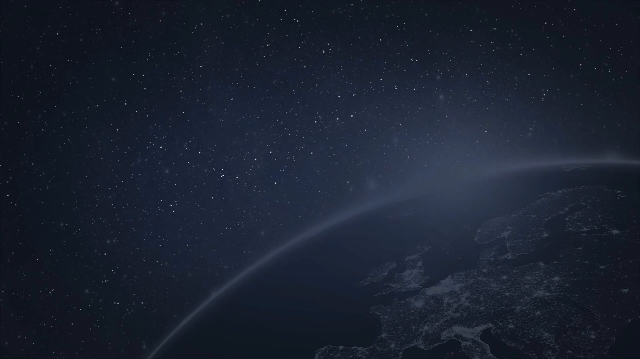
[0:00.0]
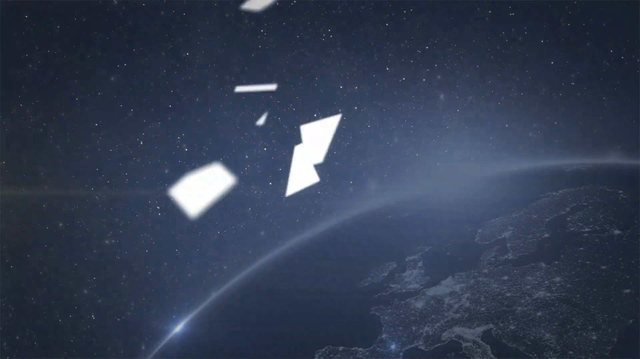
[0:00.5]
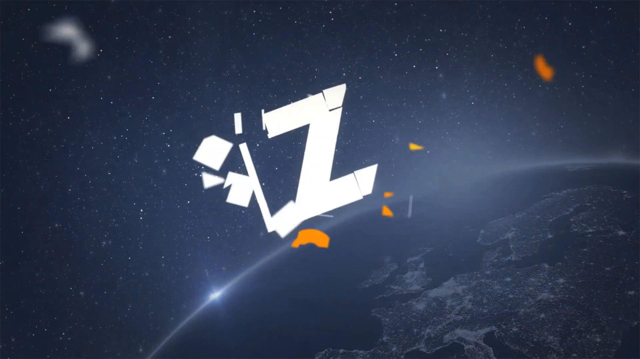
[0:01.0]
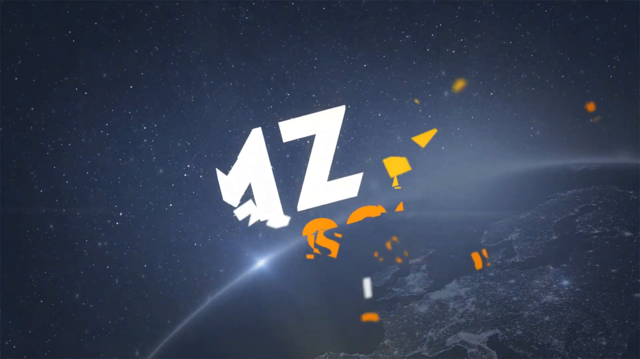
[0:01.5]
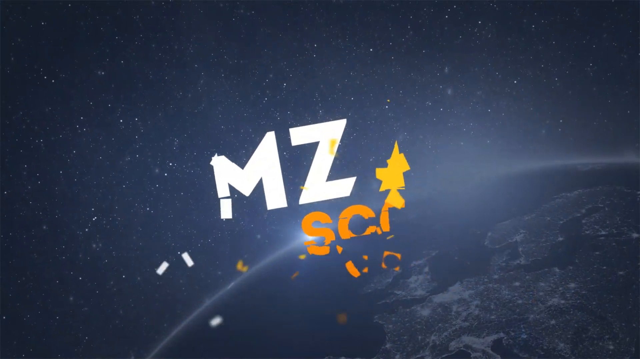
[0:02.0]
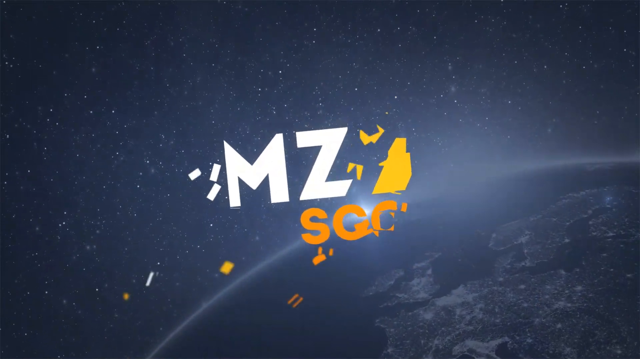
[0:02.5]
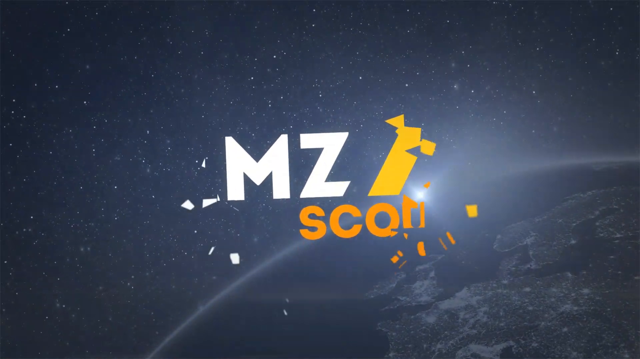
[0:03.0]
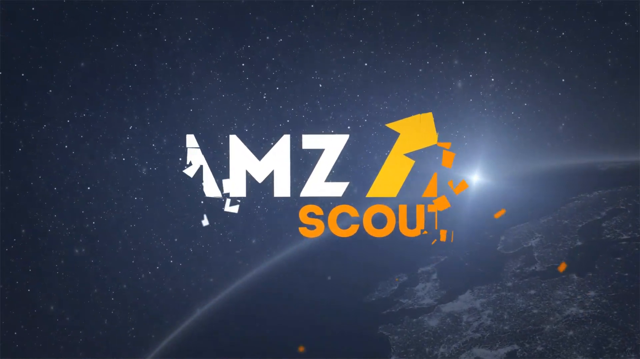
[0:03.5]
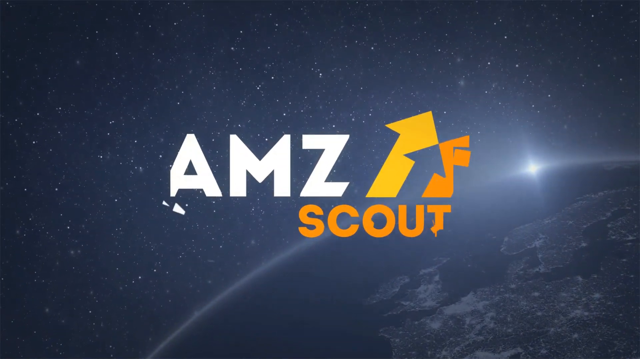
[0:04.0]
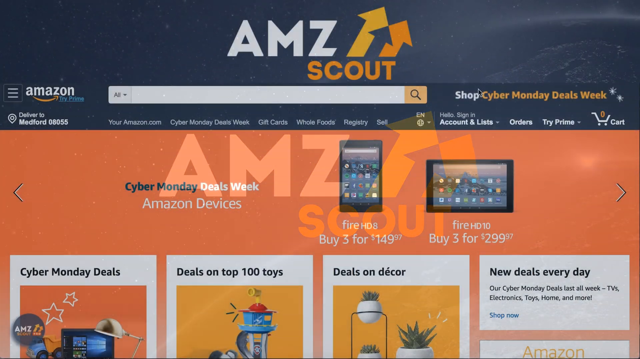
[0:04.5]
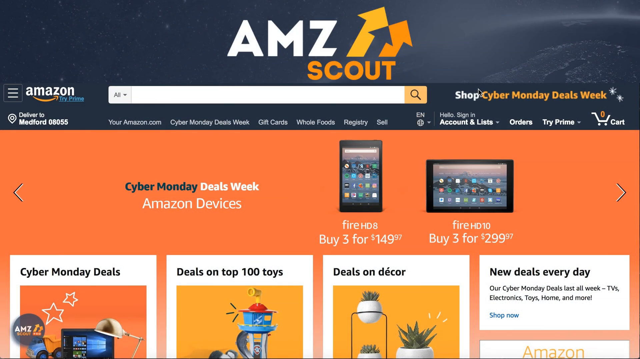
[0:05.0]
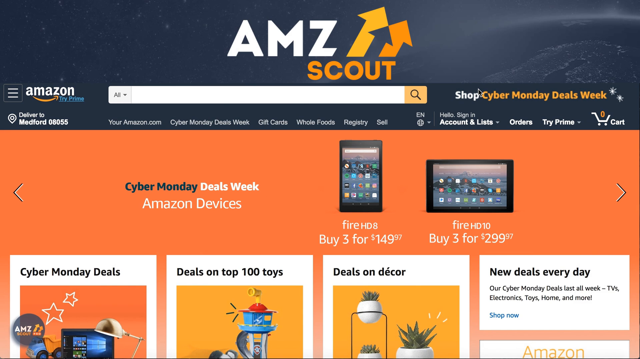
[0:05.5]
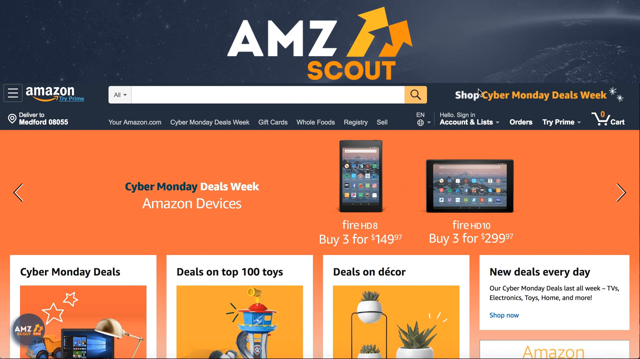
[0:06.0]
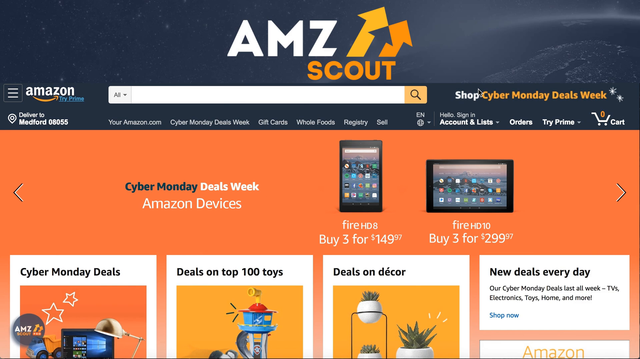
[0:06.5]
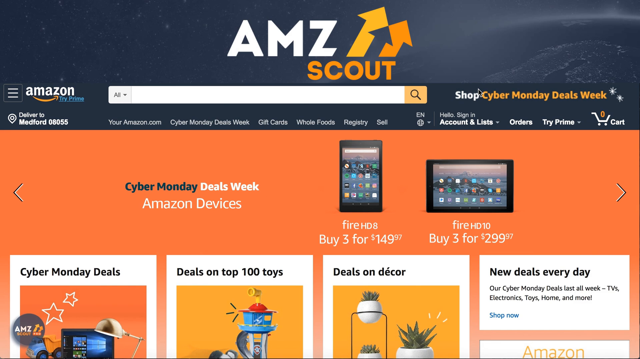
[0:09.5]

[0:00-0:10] The video opens on a shot from space showing part of the earth, its curvature at the bottom right of the screen. Parts of Europe are visible, including the United Kingdom, Ireland, Sweden, Norway, Finland, Spain, parts of France, Denmark and Germany, seen as land masses from space, with what look like stars throughout, giving a very wide view. Letters then materialize from particles, which form the words "AMZ Scout": "AMZ" is in white block text and "Scout" is smaller and orange. Beside it is a logo with a yellow up arrow and an orange up arrow, and the space between those arrows creates a different arrow. The view then moves to a page with the same name and logo. There is a search field and the text "shop cyber Monday deals week". The Amazon Fire HD 8 and the Amazon Fire HD 10 appear with deals for buying three for a price, along with "cyber Monday deals week Amazon devices".